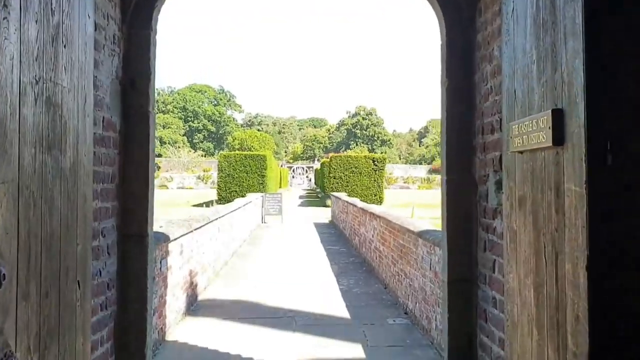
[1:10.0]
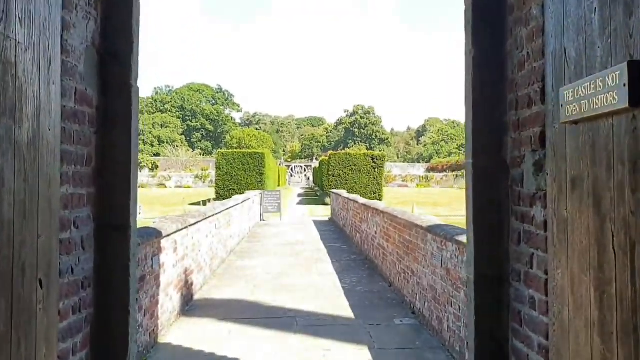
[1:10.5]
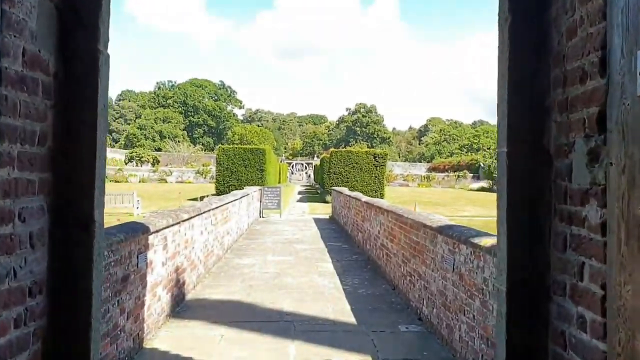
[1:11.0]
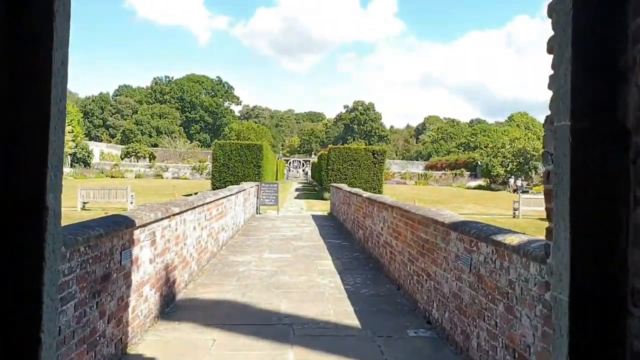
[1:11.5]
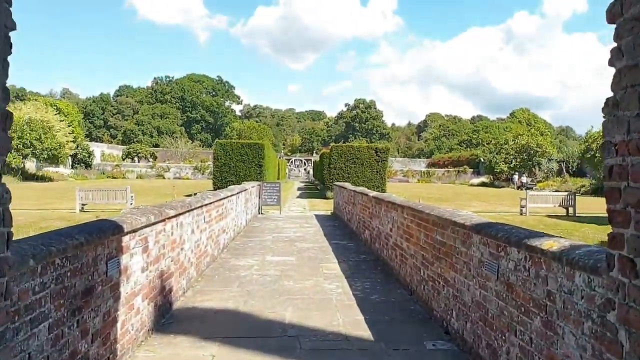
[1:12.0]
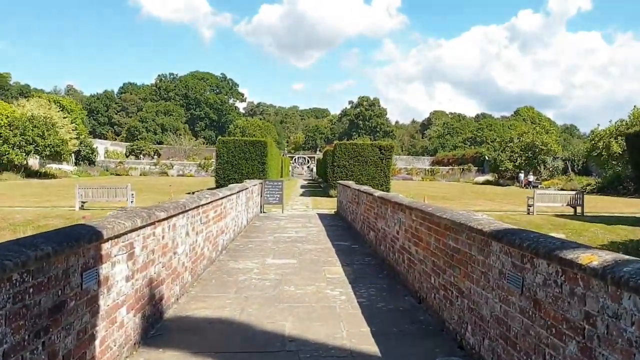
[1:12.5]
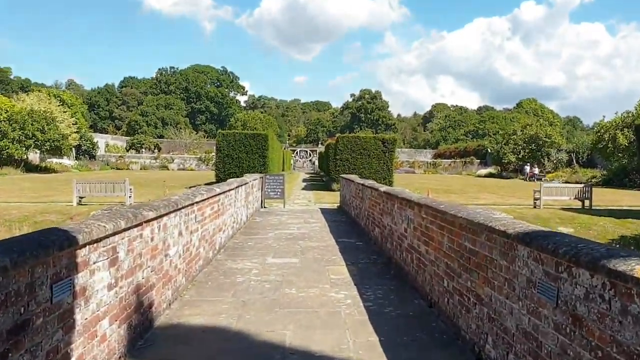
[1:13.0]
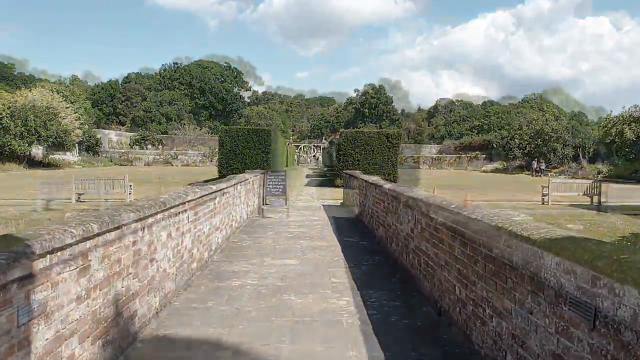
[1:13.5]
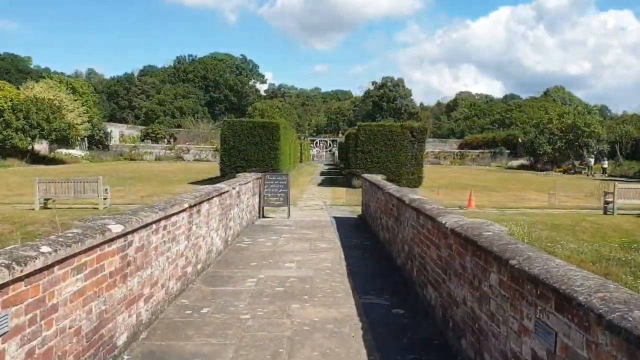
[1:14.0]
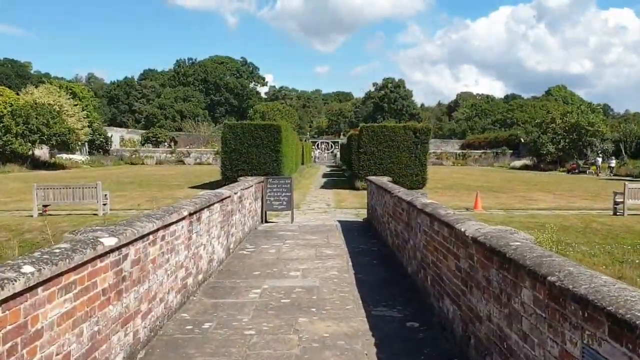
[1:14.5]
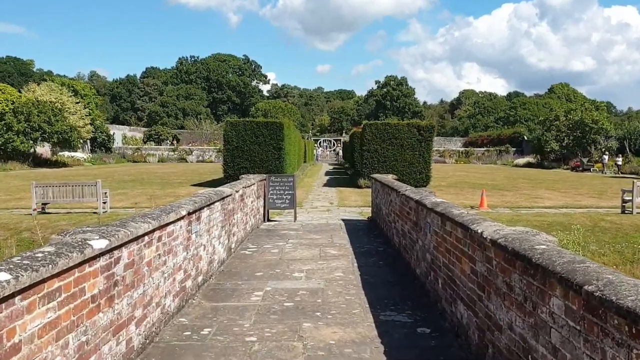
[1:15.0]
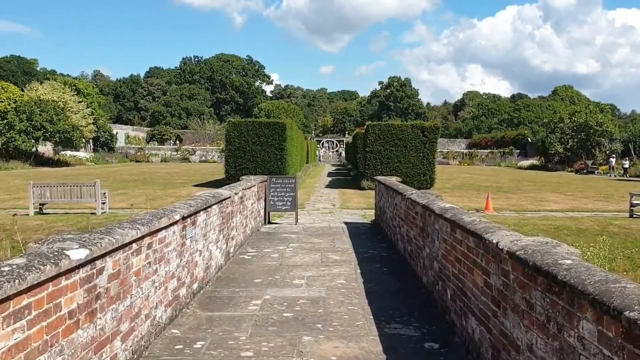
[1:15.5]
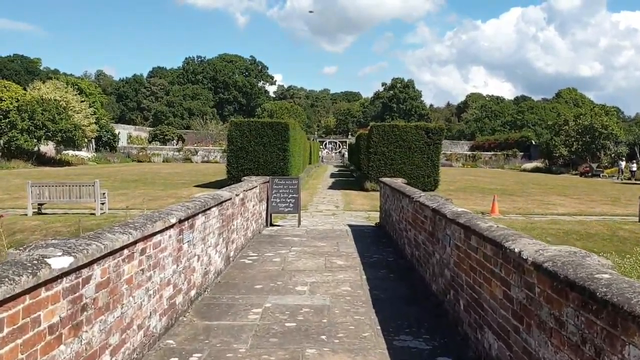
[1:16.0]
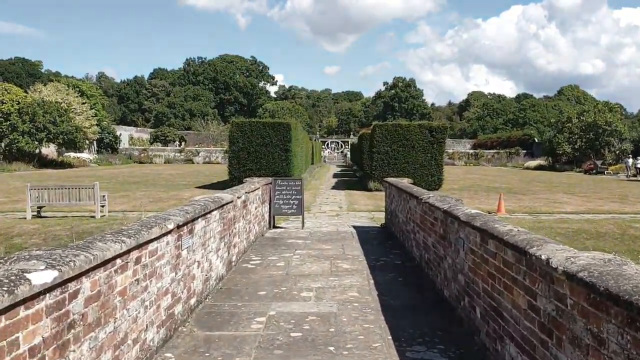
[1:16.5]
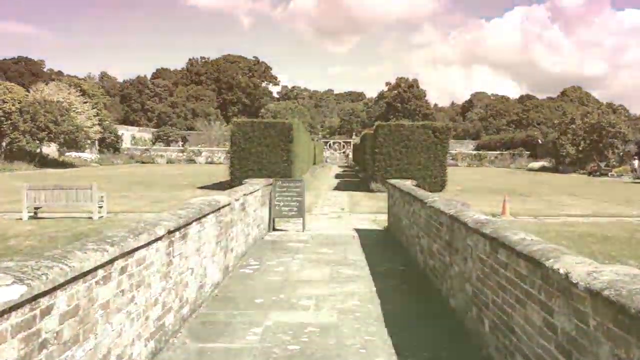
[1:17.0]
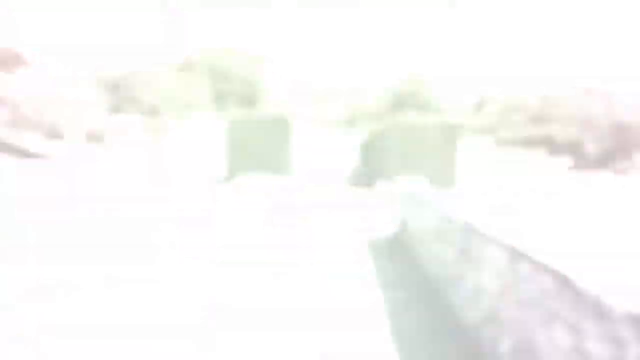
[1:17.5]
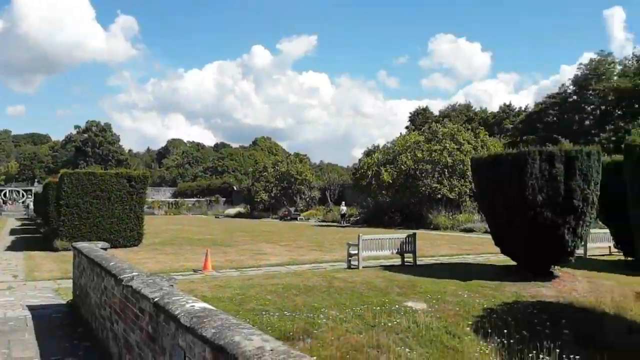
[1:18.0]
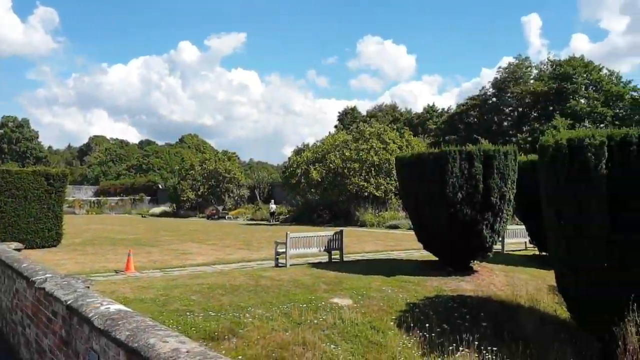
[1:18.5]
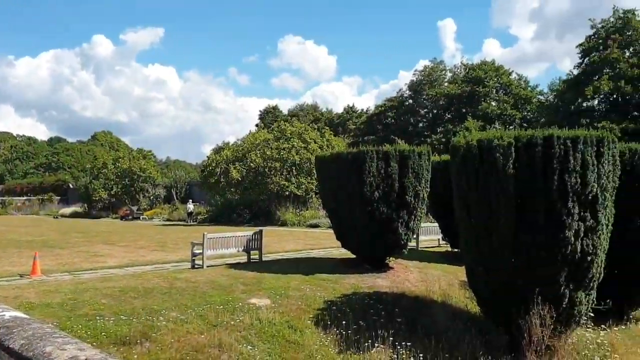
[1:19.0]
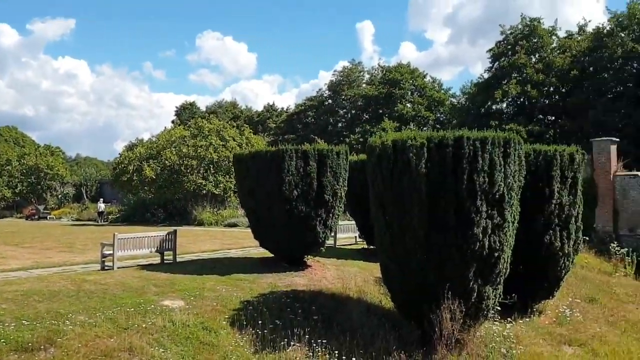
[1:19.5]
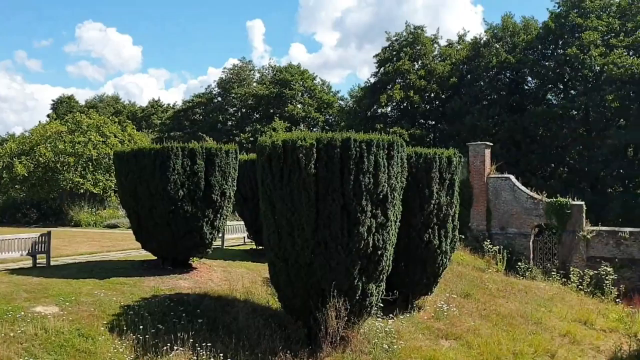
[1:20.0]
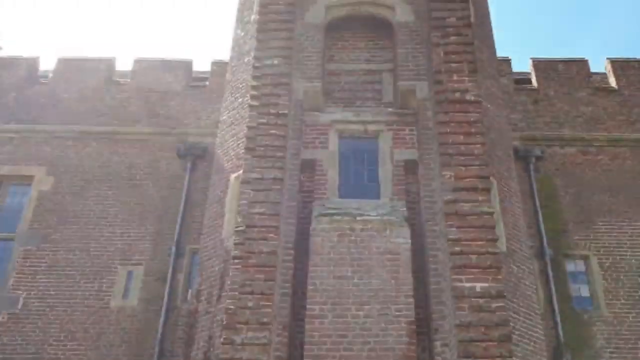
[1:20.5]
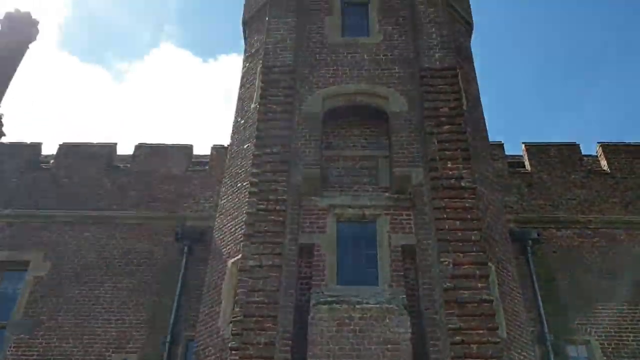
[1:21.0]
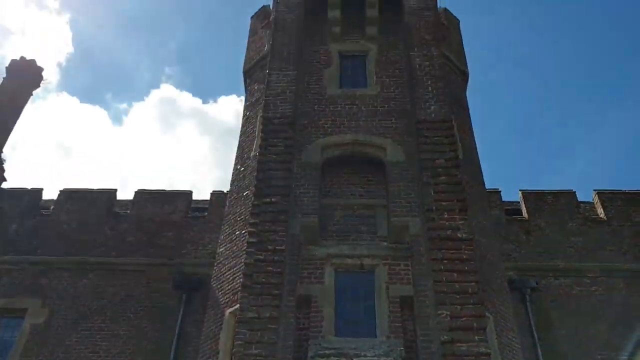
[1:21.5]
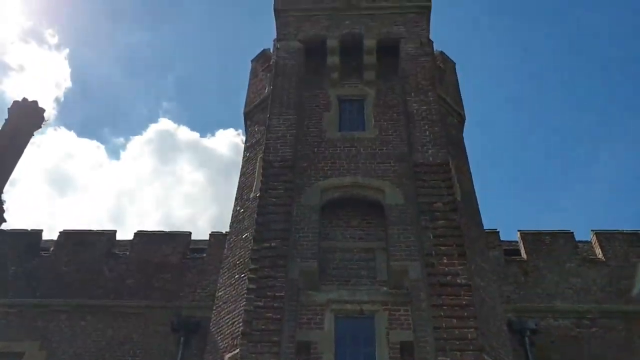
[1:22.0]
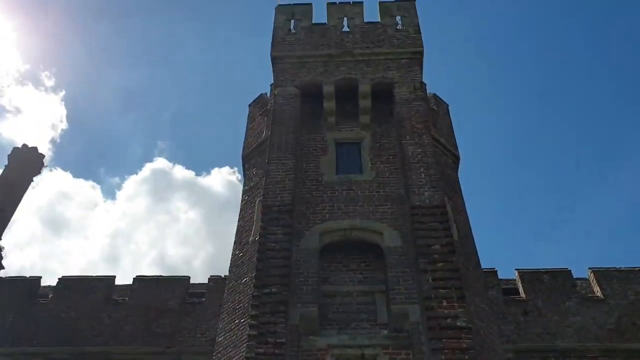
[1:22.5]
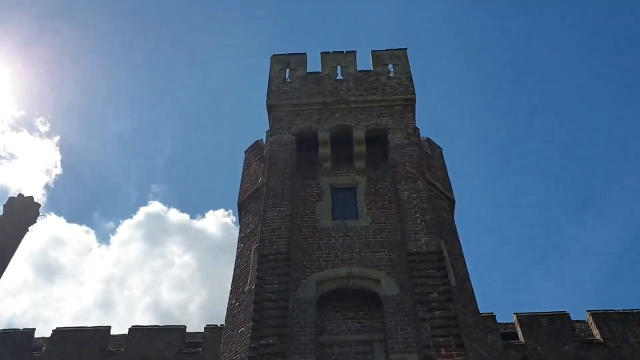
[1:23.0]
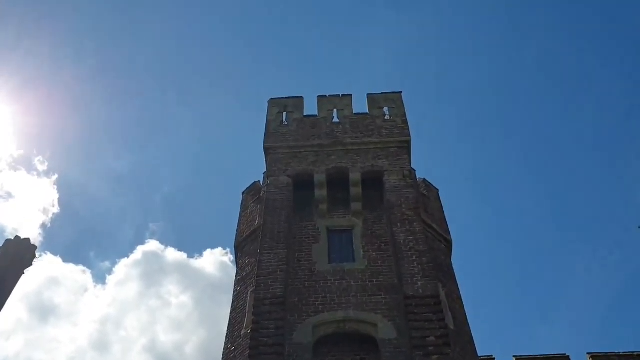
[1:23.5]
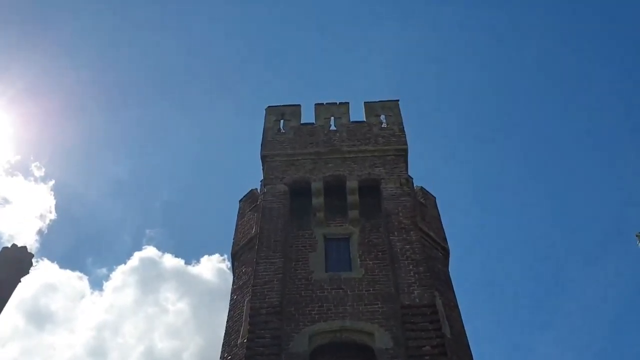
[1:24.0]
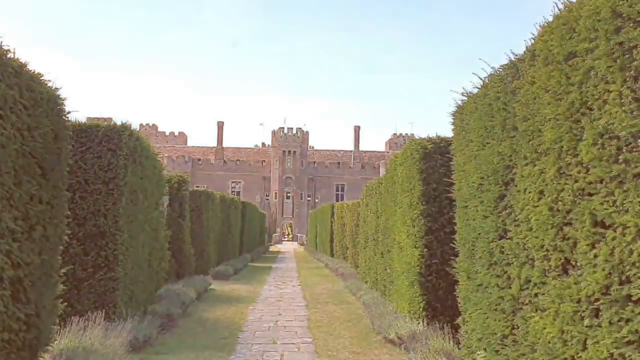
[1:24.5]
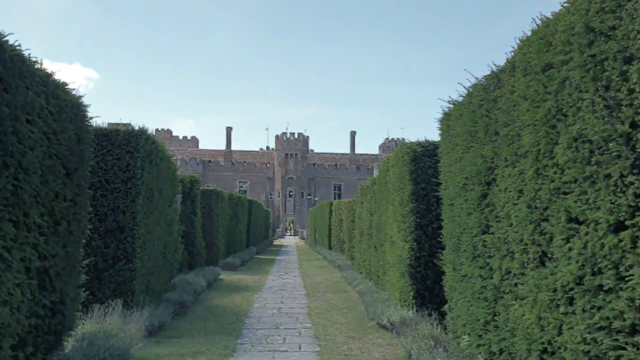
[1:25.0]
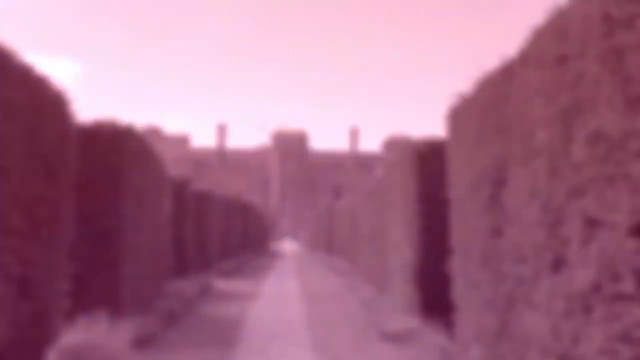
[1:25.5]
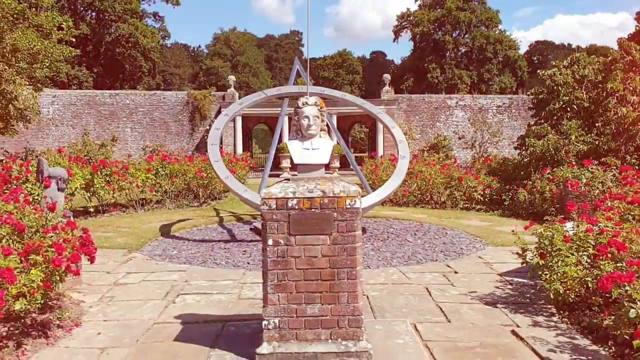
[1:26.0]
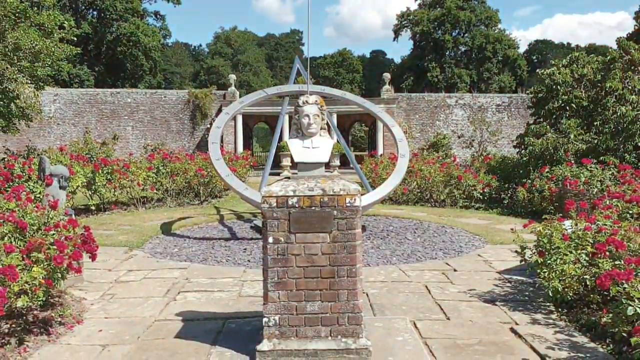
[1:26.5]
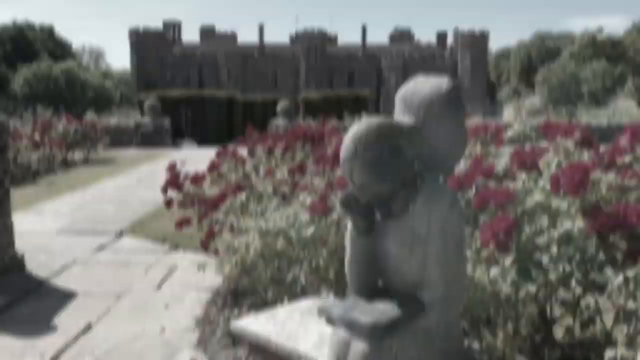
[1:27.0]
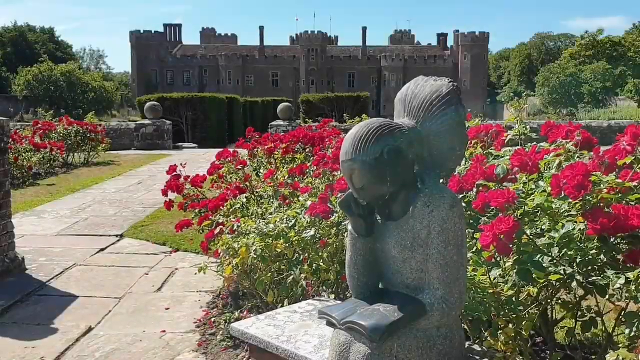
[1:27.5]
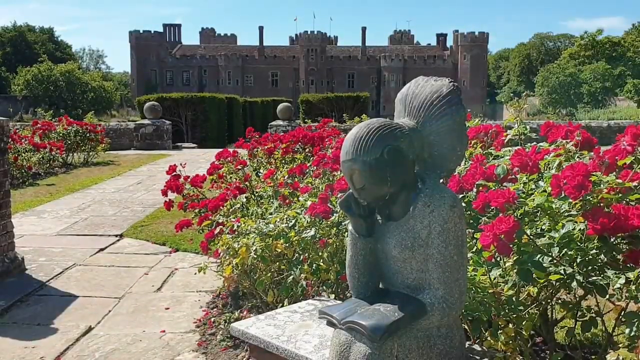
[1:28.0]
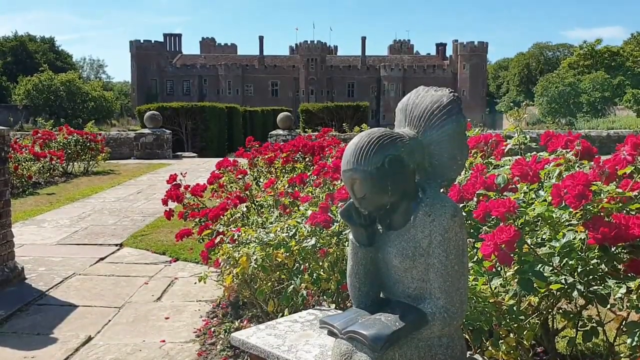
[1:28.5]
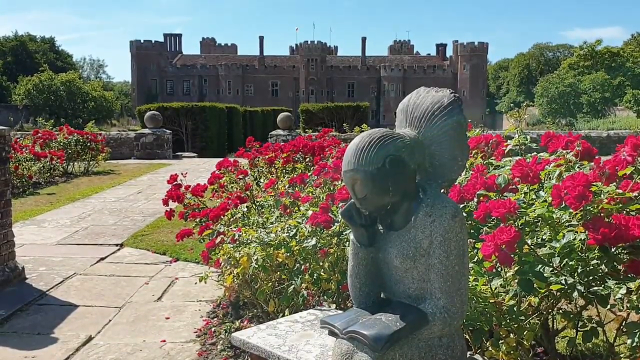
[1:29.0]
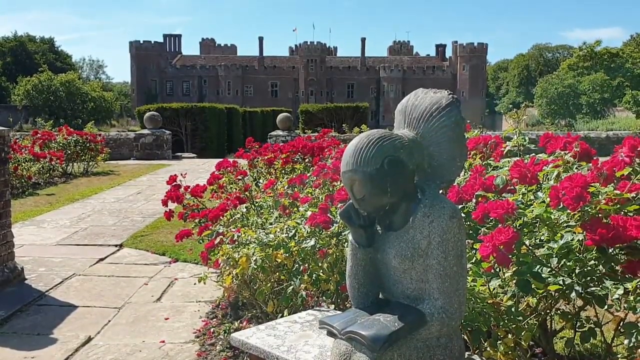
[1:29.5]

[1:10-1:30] Herstmonceux Castle in Sussex, a 15th-century castle, appears in what seems to be a re-edited version of the same footage. Some of the same scenes appear, including the people, the suit of armour wearing a Covid mask, and some antibacterial hand cleanser. The clock is visible, along with apparently more extensive views of the castle grounds, exterior shots of the castle and some sculptures in the garden. The editing is faster, showing more of the castle, its gardens and its features, and the family and other people walk through at different times. There are no subtitles.